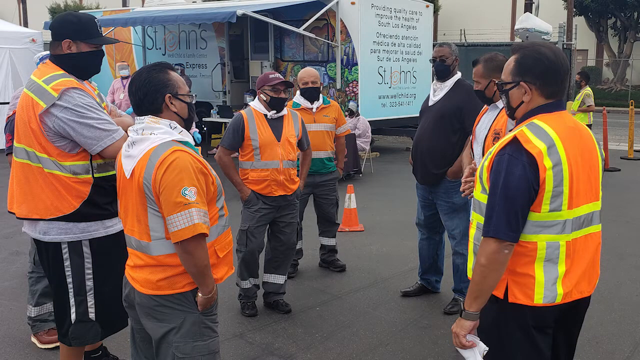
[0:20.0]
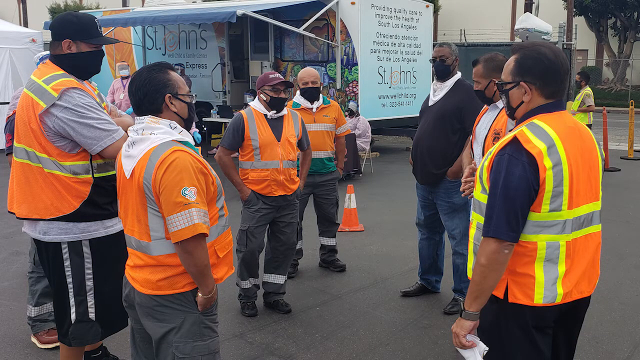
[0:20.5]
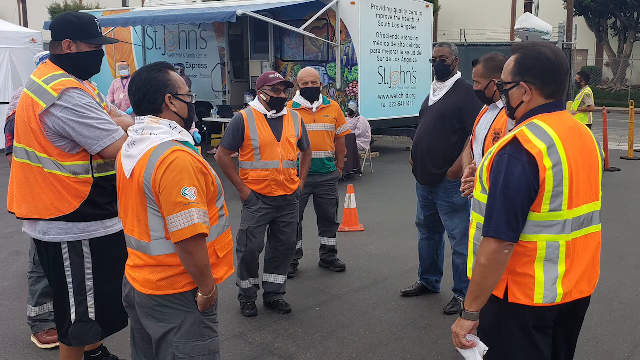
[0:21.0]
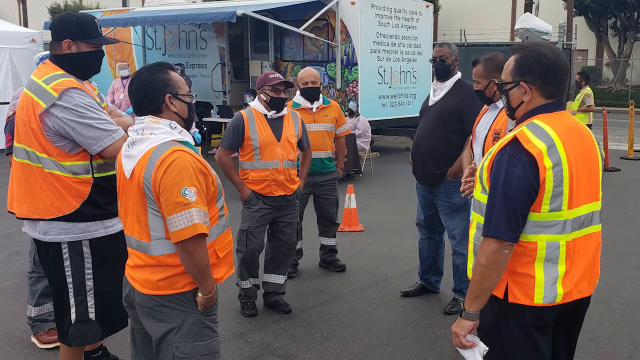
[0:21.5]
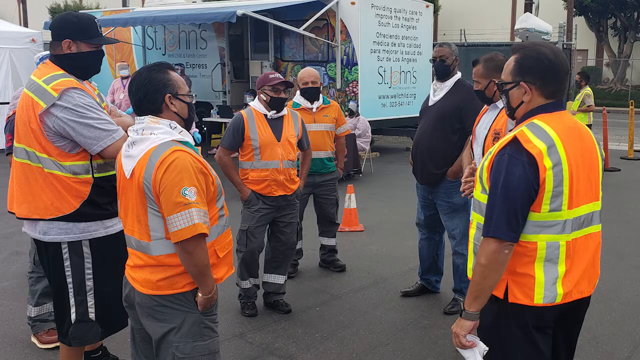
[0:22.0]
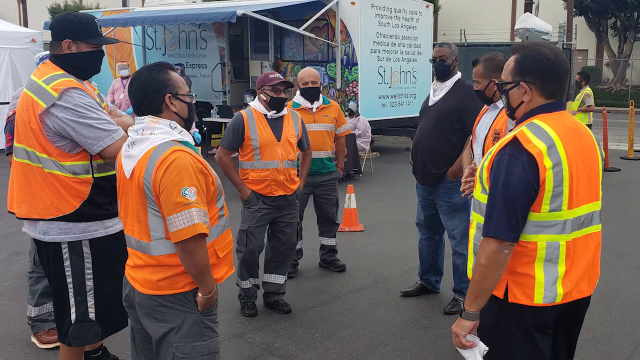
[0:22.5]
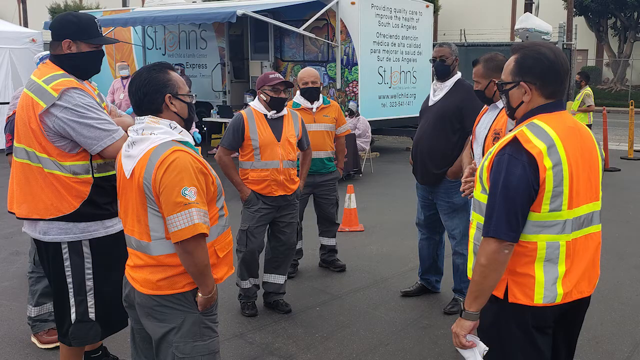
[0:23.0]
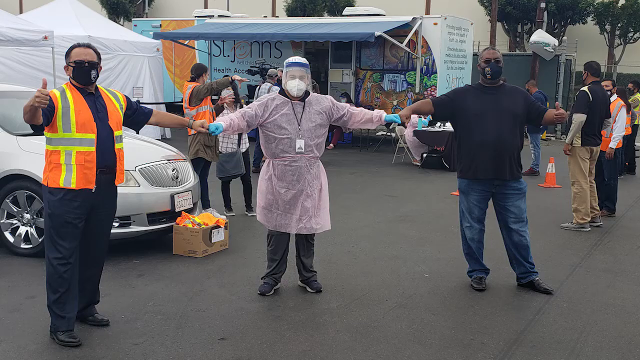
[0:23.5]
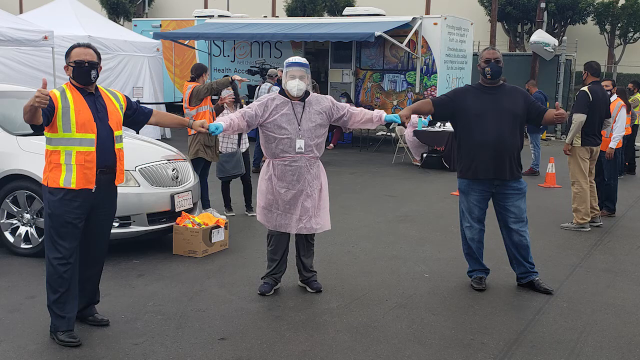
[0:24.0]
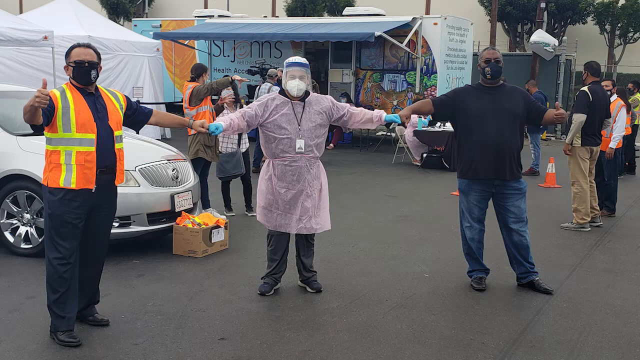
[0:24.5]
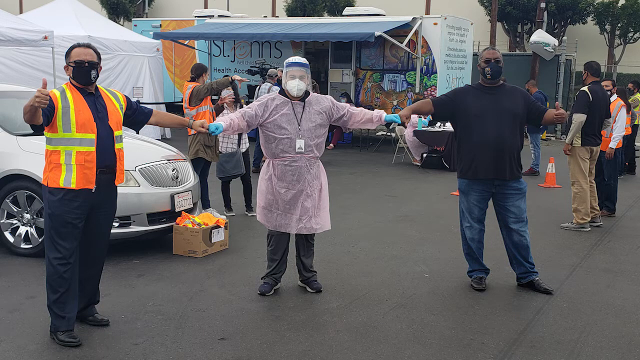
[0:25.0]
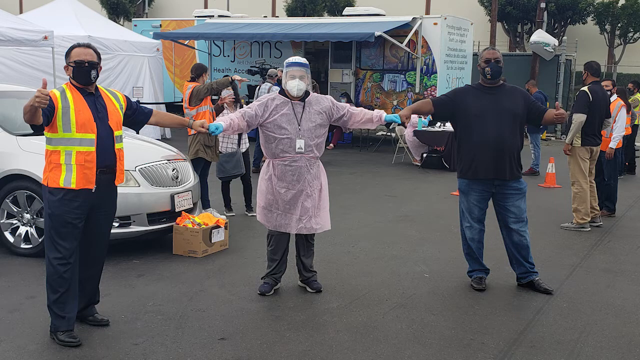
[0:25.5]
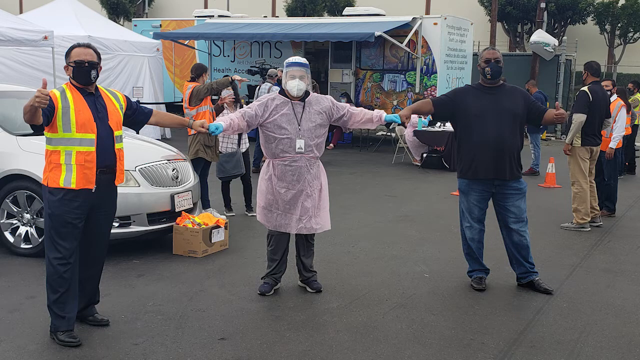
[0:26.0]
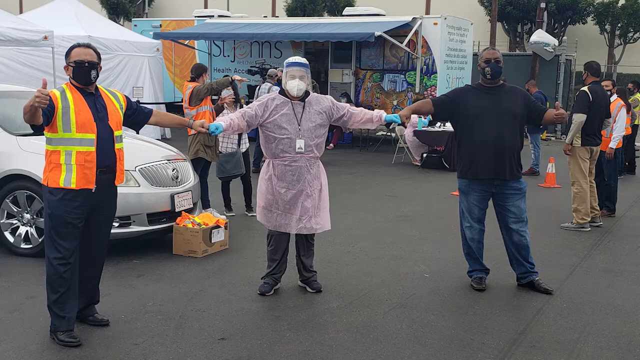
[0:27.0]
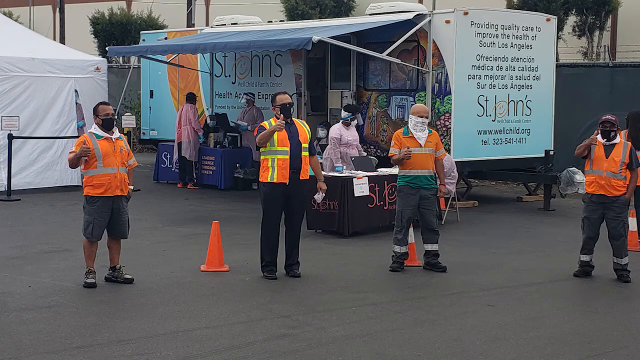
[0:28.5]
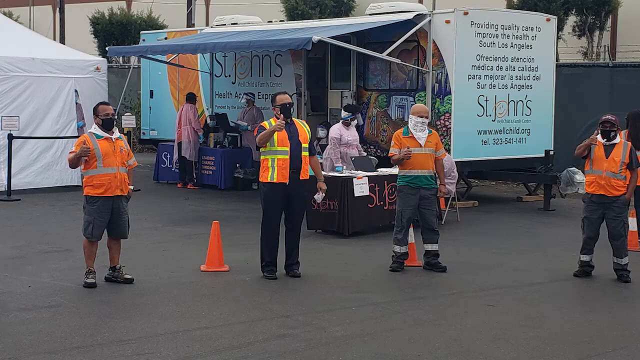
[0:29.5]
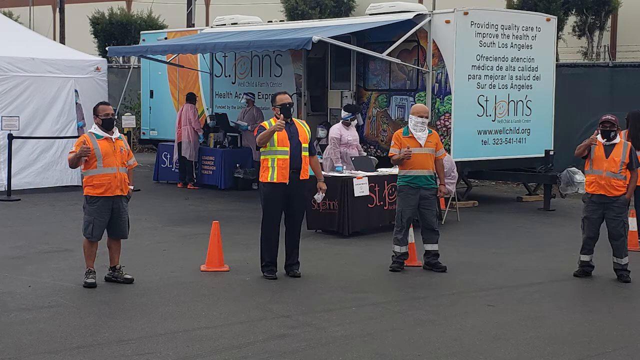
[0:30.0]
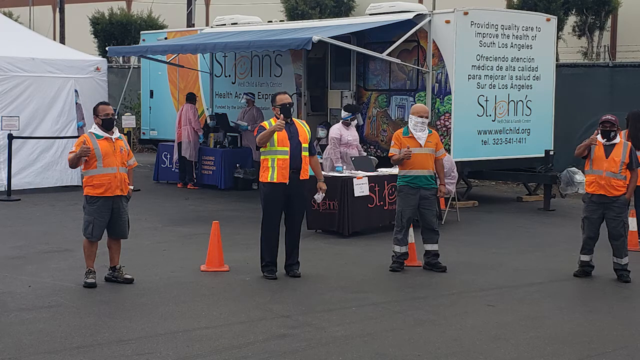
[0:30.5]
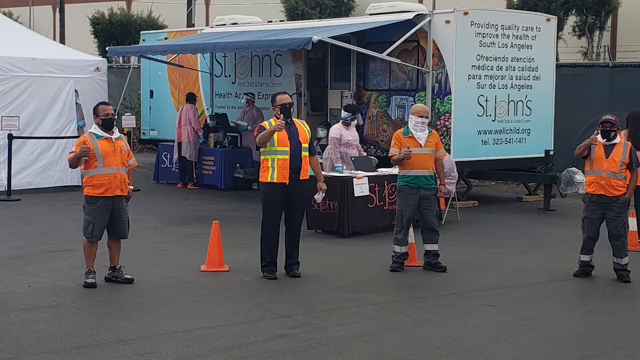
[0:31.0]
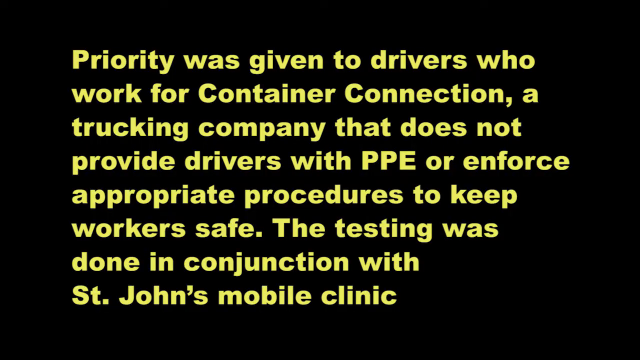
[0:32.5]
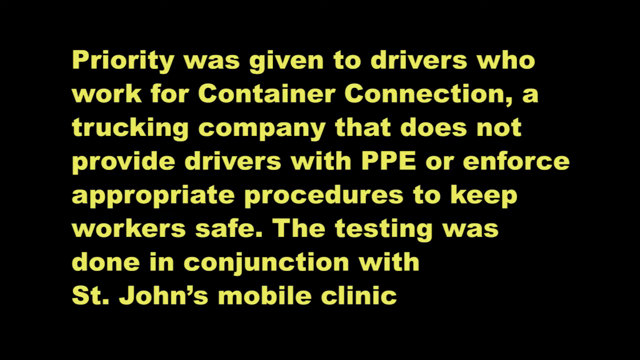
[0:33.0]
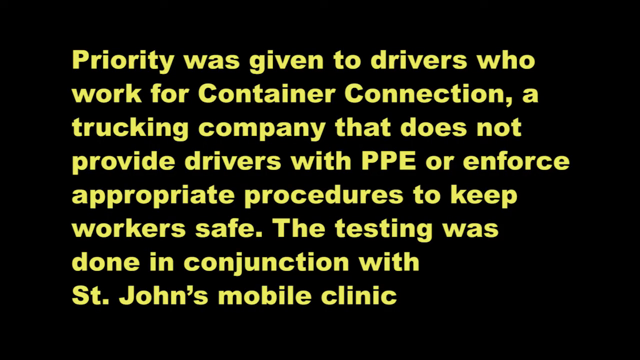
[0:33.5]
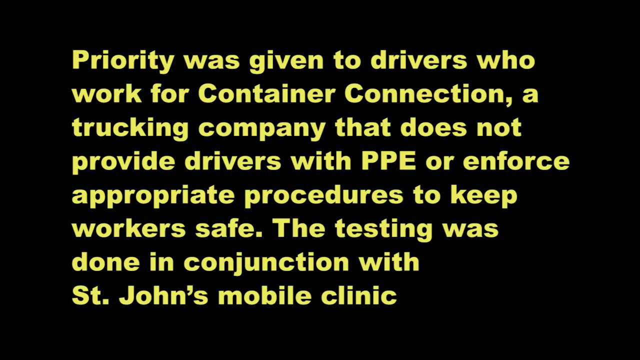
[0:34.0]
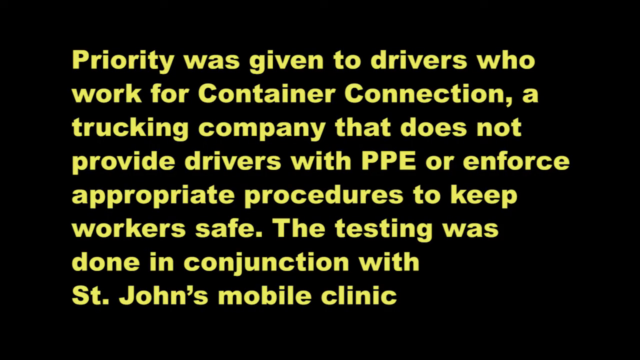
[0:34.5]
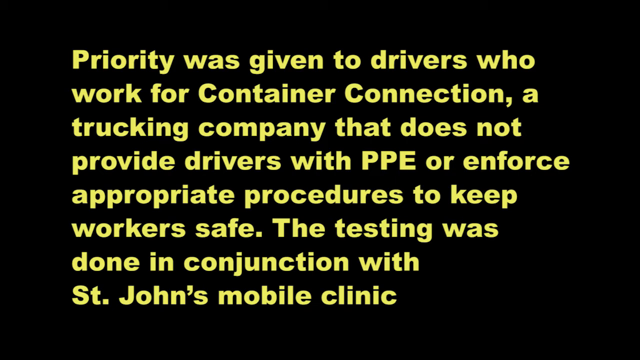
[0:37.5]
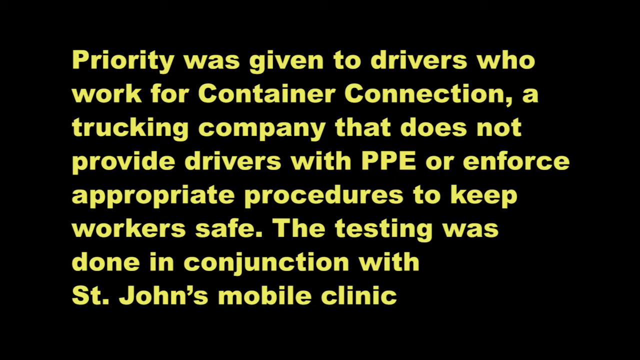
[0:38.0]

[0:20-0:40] A team in yellow and orange reflectors stands on the ground. One of them wears a black T-shirt and jeans, and another is seated. A temporary building in St. John's has writing all over it. A team of people holding each other appears, including a man in black, one in a reflector, and another who has covered himself; all of them wear masks. Other people are in the background, along with a box loaded with stuff, a car, and more people standing. A tree is behind them. Another team of four people follows, and at the end a statement written in yellow appears. Throughout, different sets of people are shown standing in different postures.